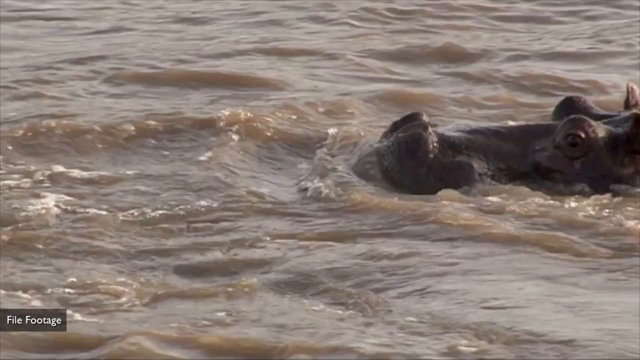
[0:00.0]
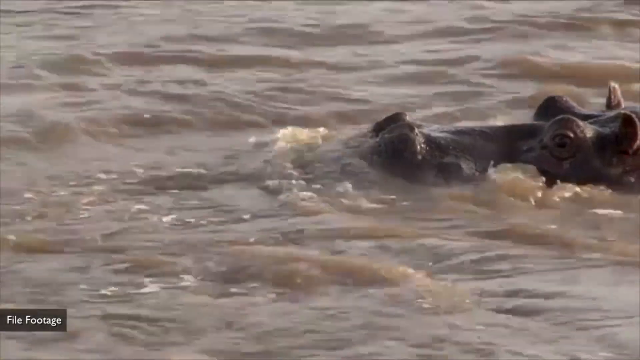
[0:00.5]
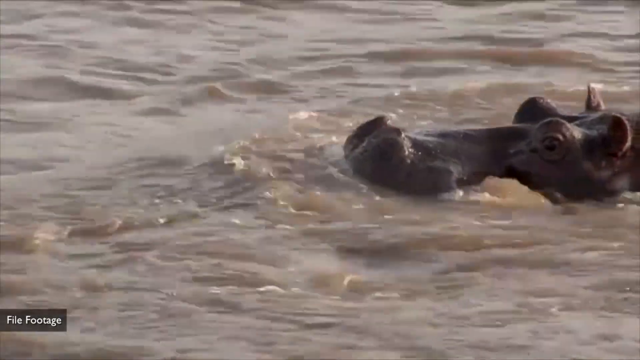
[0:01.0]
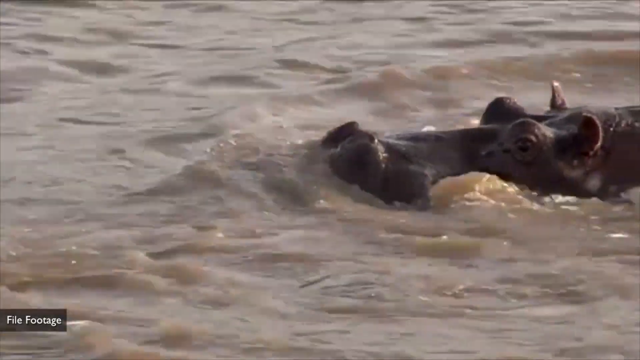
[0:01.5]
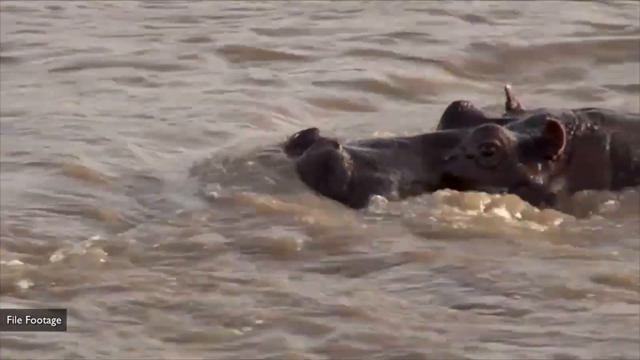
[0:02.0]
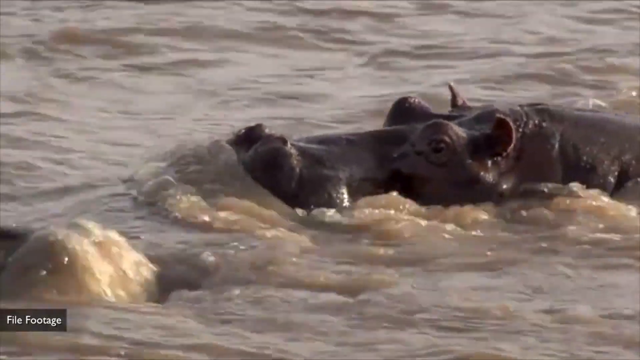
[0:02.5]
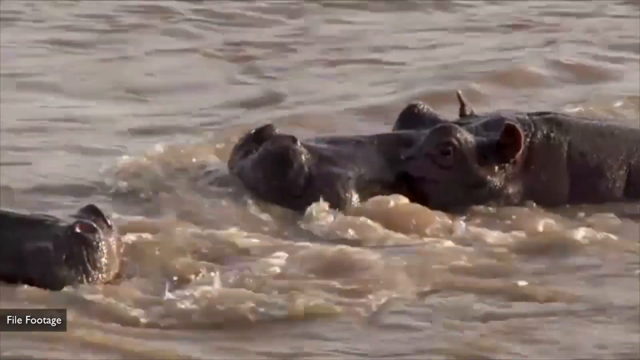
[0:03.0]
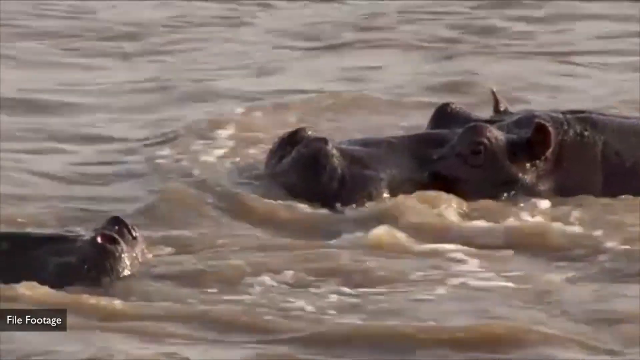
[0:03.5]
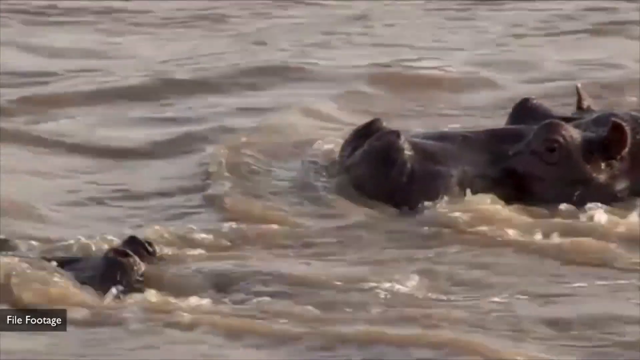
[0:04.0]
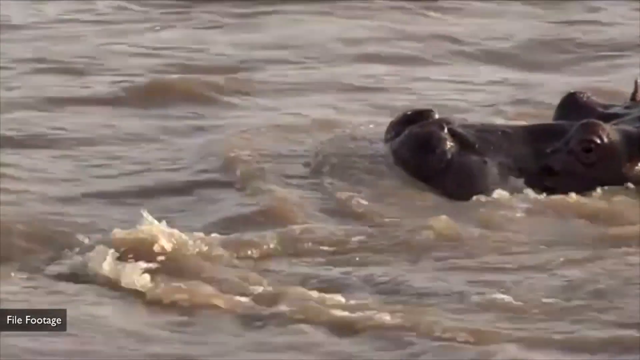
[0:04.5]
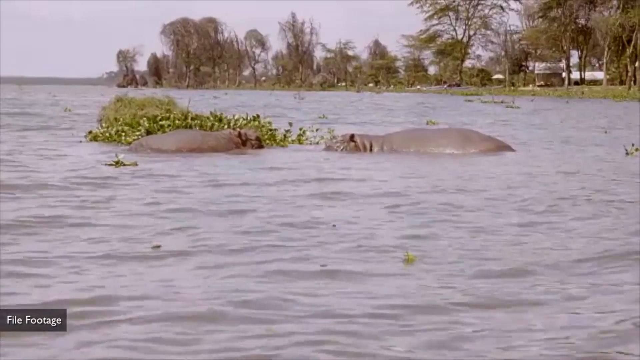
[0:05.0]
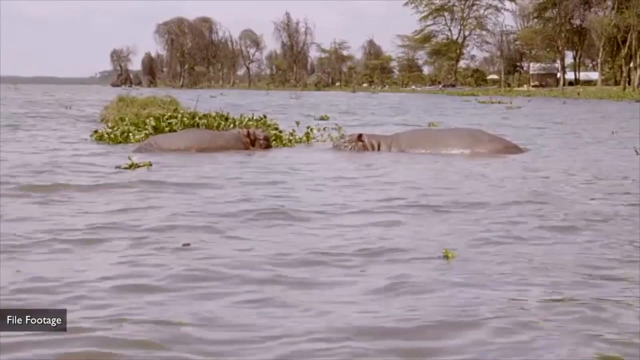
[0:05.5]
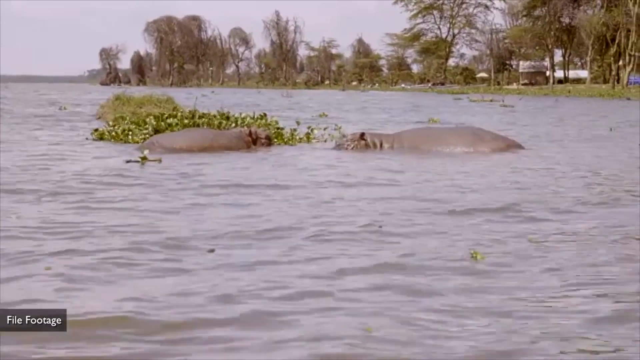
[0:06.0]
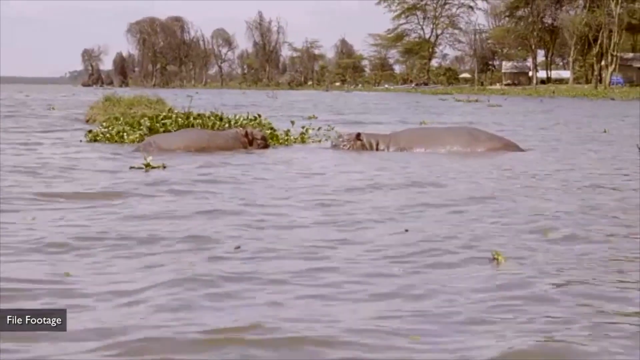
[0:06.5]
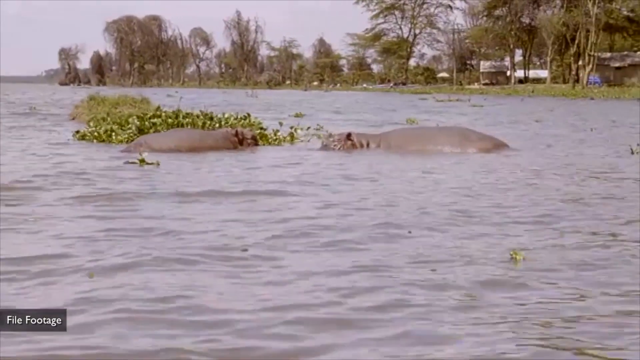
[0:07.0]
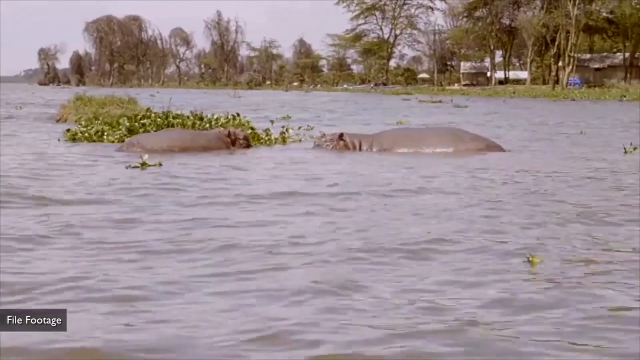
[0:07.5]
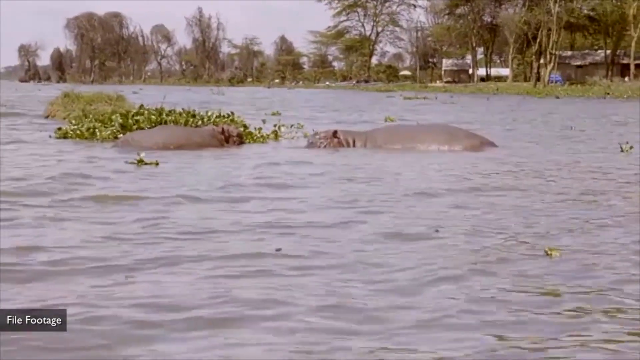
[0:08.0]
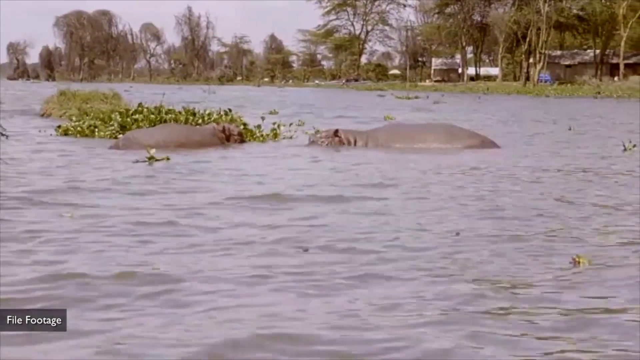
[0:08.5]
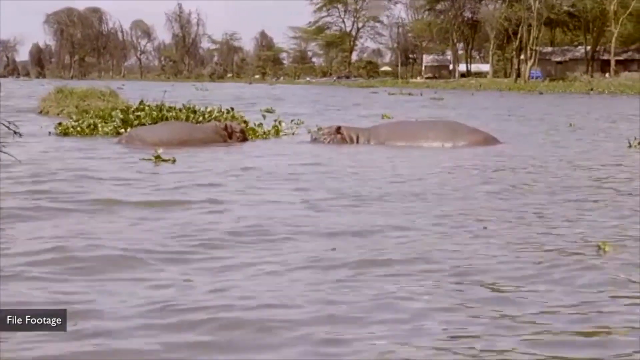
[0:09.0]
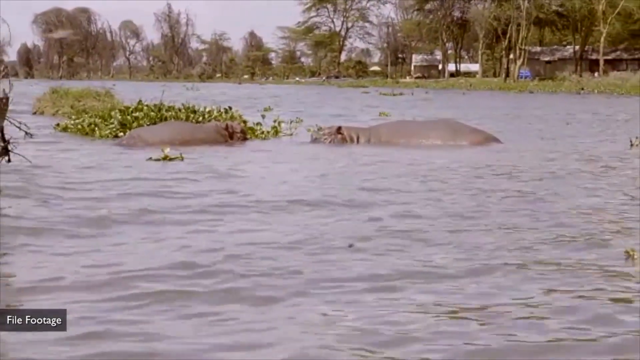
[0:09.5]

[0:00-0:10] Two huge hippopotamuses, which look like a female and a male, are in a large body of water that seems to be a river. They seem to be playing, facing each other, and one moves toward the other. The water is dirty rather than clean, and there are a lot of leaves where they are. Green trees and a wide expanse of sky are visible, along with white walls and roofs; the river, or possibly a dam, seems to be near where people live, with houses next to the river. There is something purple, and birds are flying. The river seems big and is seen from afar.